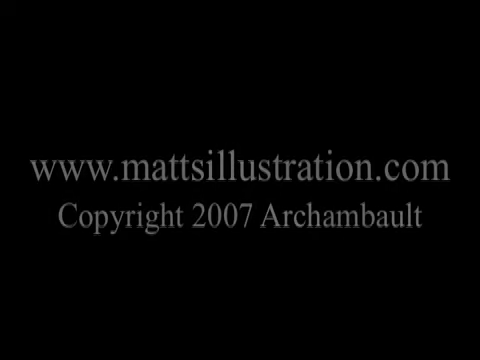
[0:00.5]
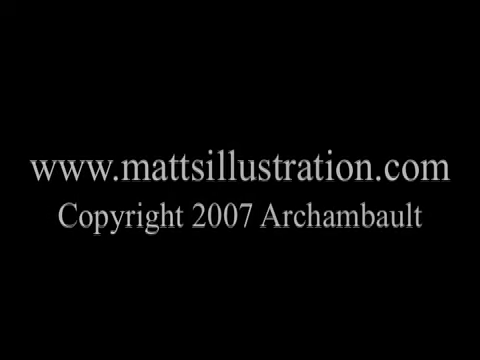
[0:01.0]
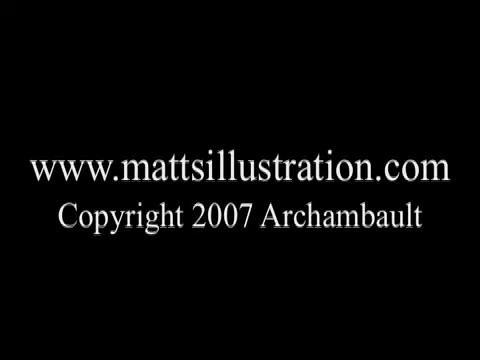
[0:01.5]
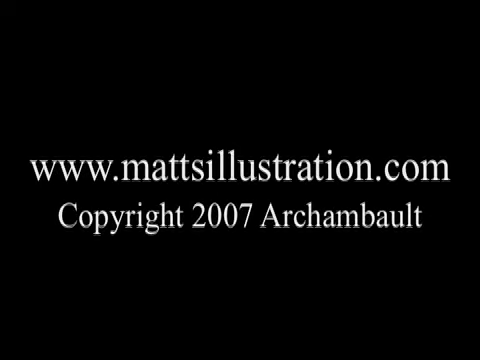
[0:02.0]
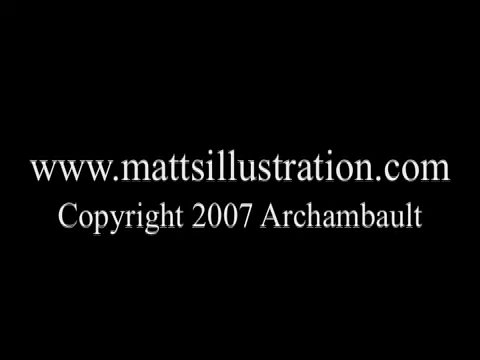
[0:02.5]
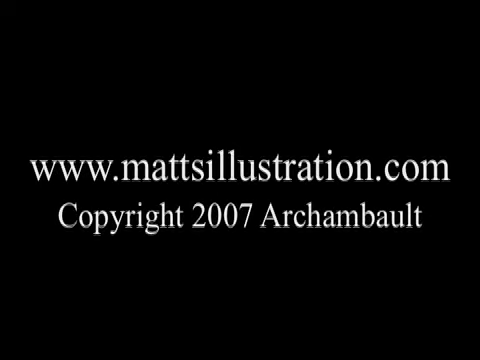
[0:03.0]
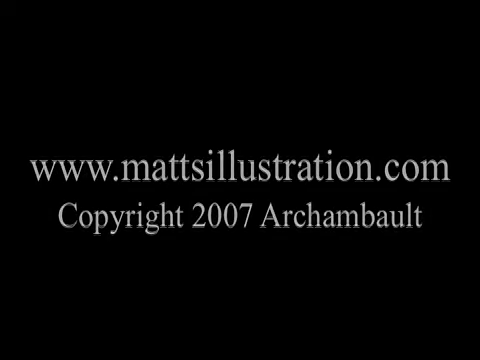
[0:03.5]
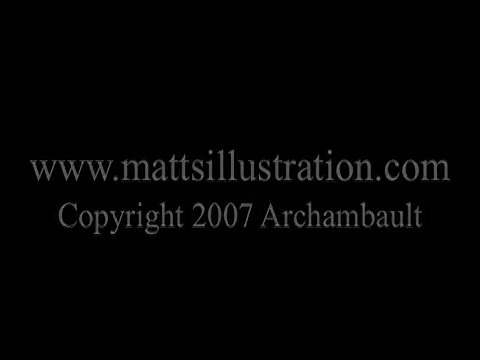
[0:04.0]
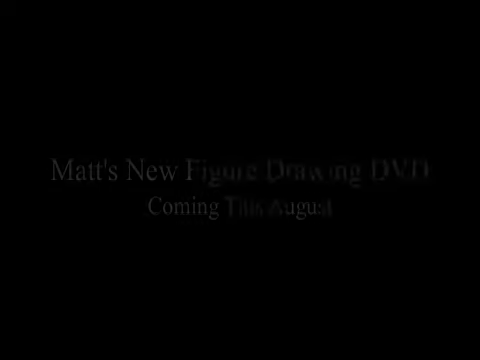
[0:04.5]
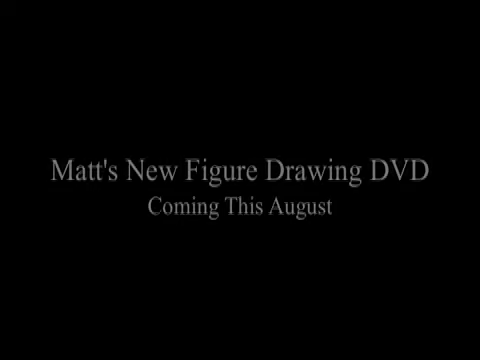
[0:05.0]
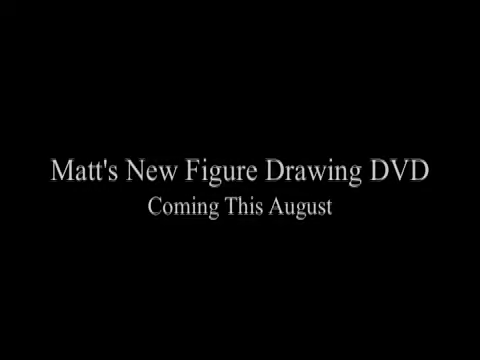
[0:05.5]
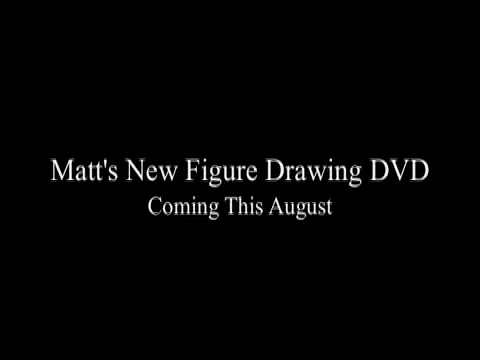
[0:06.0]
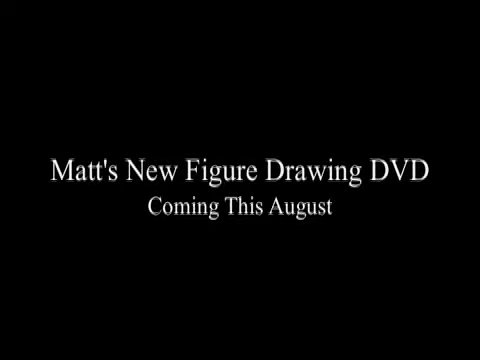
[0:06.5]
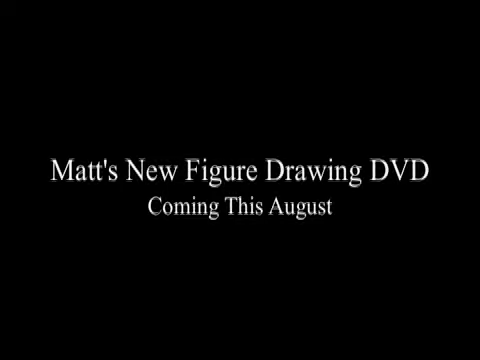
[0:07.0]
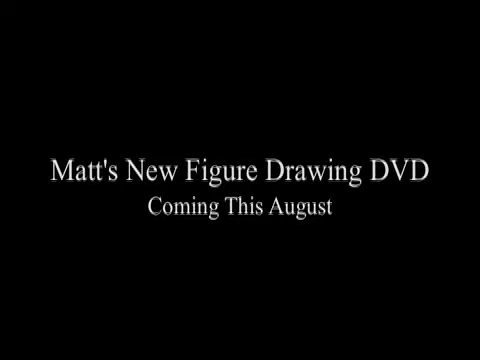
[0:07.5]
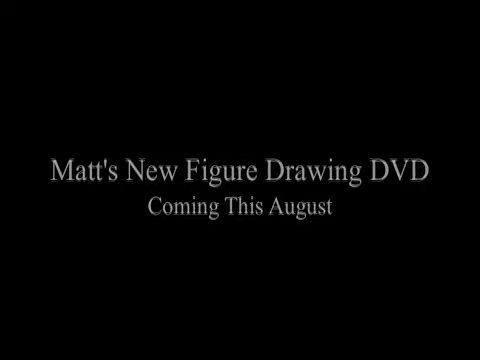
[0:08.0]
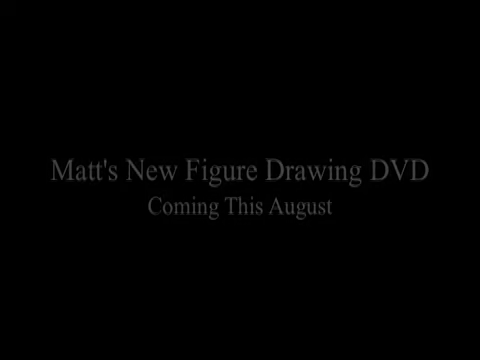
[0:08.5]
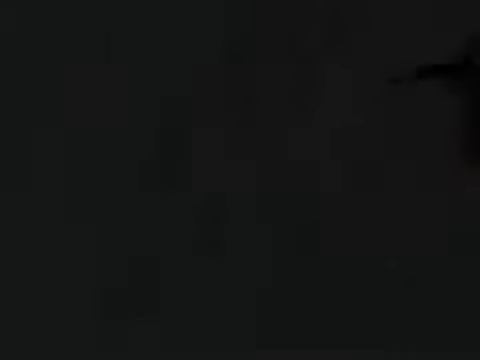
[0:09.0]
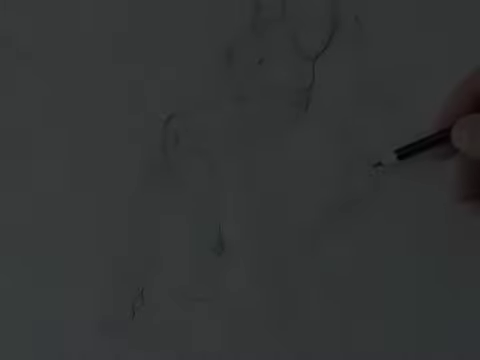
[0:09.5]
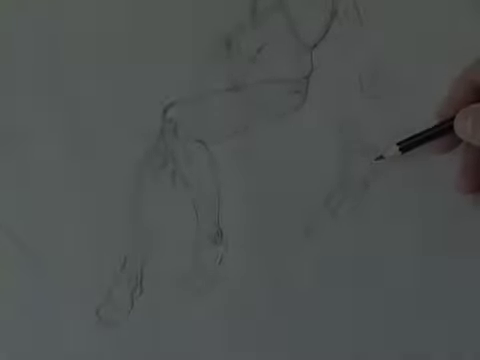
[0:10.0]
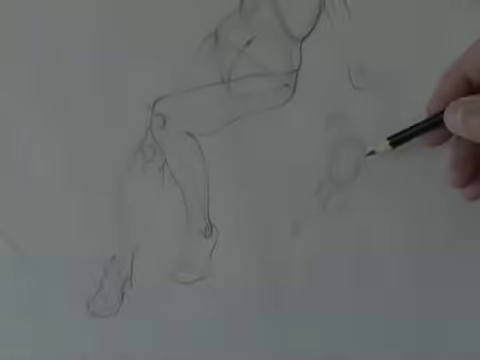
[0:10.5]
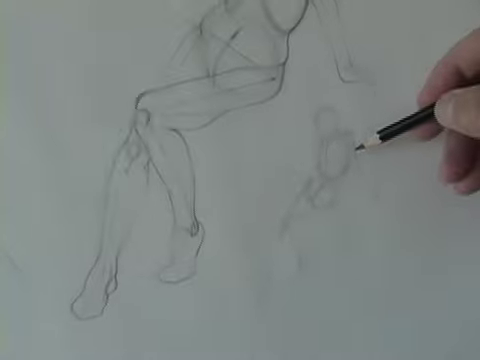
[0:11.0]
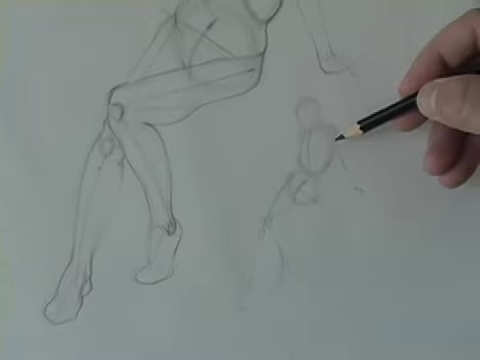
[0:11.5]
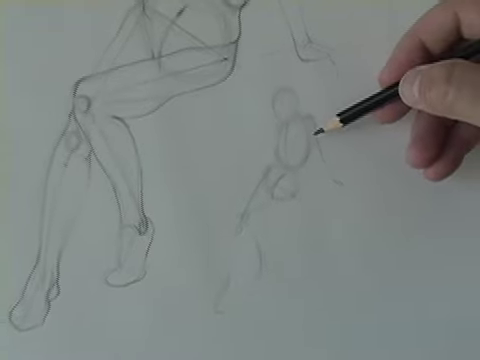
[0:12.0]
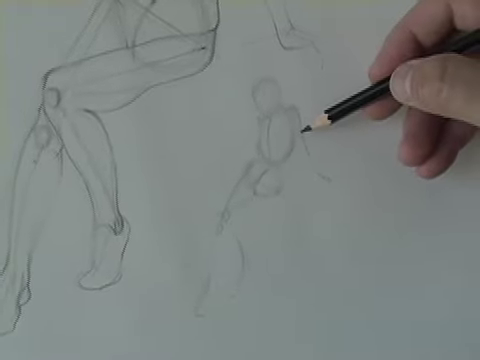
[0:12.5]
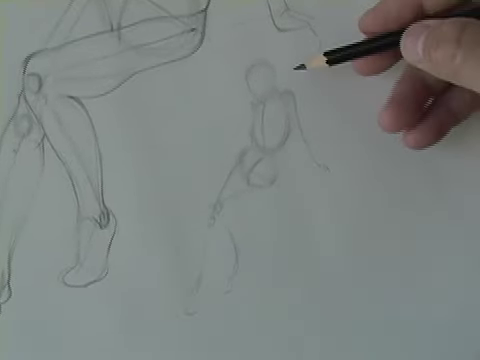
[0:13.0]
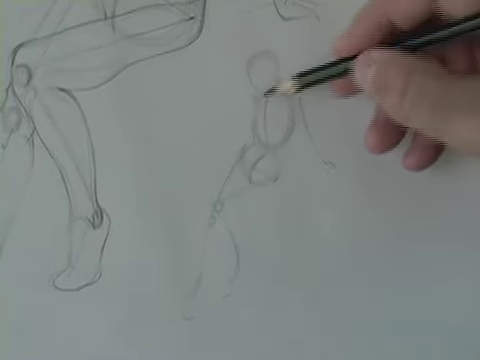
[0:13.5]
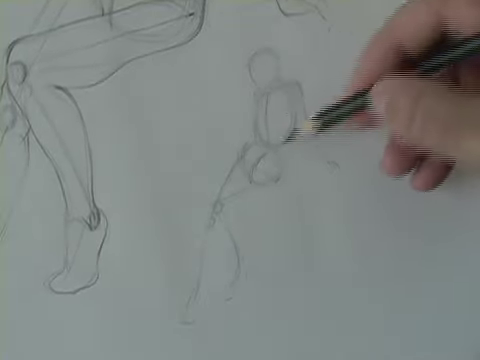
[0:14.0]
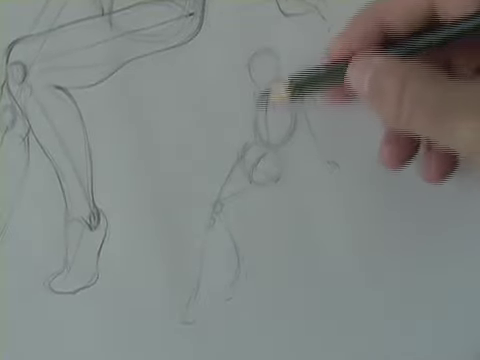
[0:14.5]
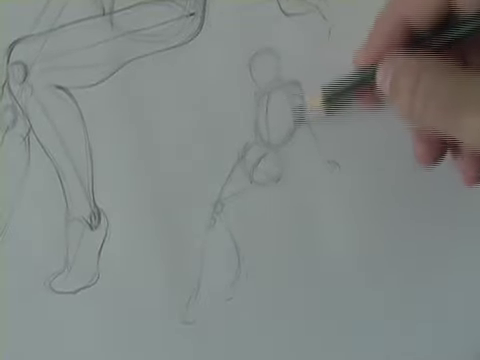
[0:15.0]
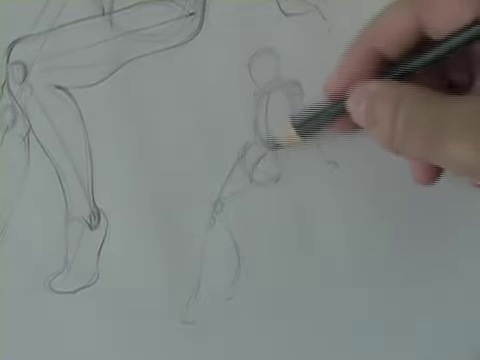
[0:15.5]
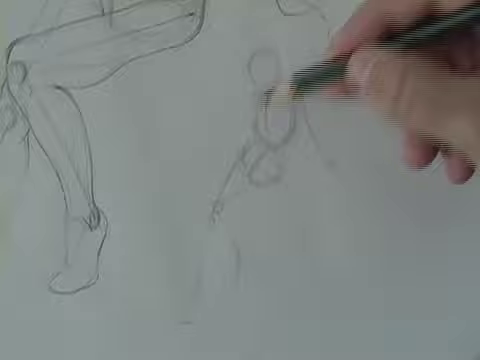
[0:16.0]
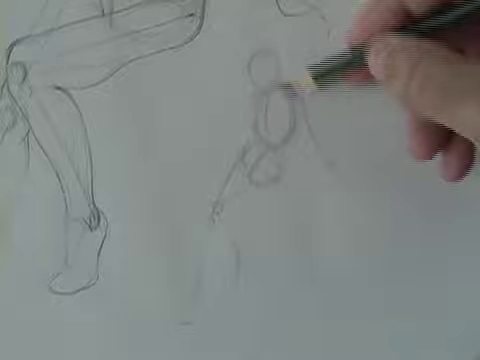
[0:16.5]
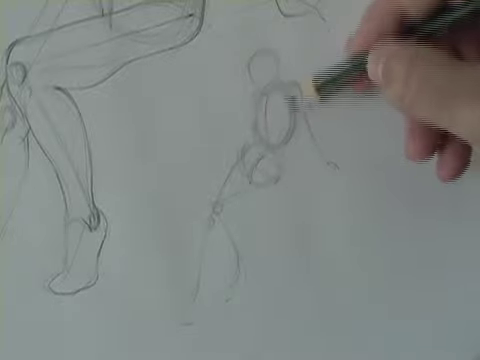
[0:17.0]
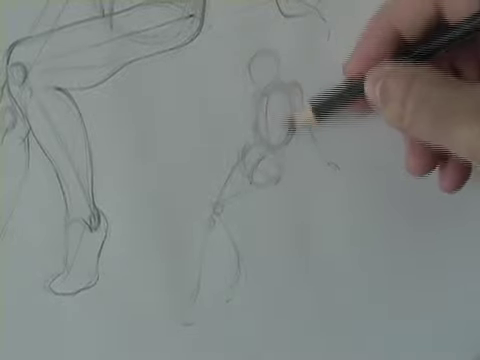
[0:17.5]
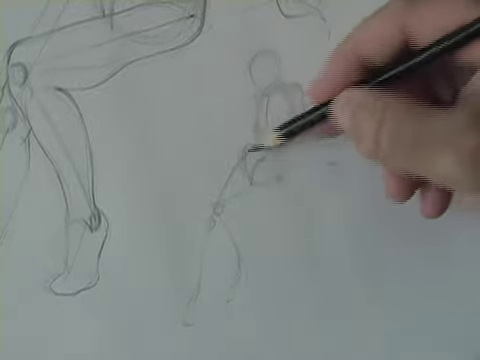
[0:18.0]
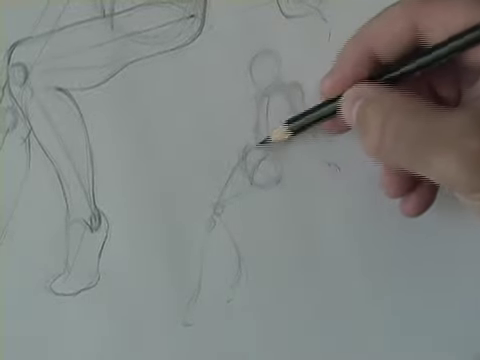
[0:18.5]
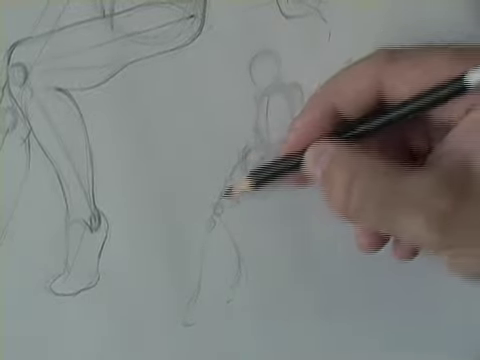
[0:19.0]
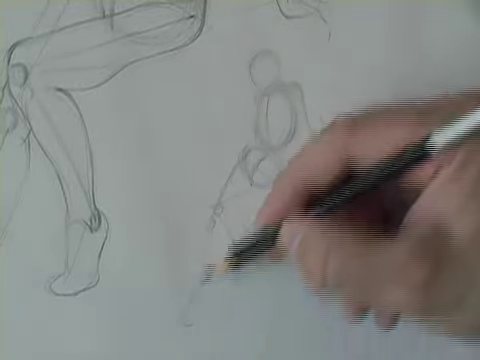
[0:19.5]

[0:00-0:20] The video opens on a black background with white text appearing on the screen. A website is shown in the middle of the screen, with the video's copyright right below it in white. Another white text then appears in the middle of the screen. Next, sketches of humanoid caricatures appear, probably women based on the anatomy of the models. The creator's hand draws with a pencil, making circles to design the body, the legs and the upper leg part. The camera zooms in on the smaller figure the creator is now drawing, on the left, while above it is a bigger figure that has already been designed. Many lines inside the design indicate where each body part should be, roughly outlining where the legs, torso and hands are in relation to one another.